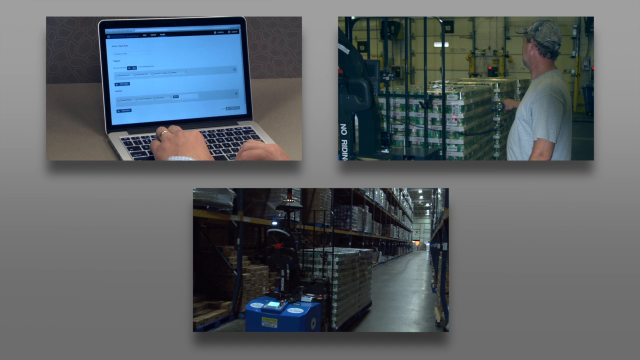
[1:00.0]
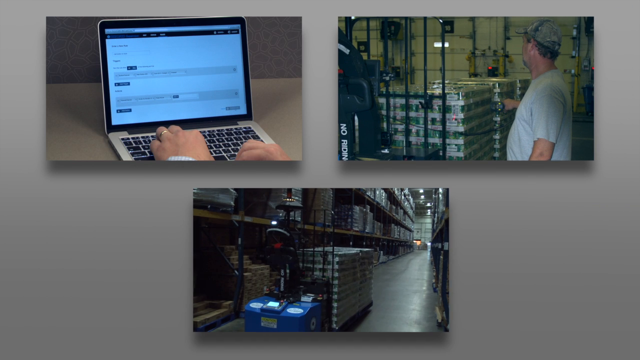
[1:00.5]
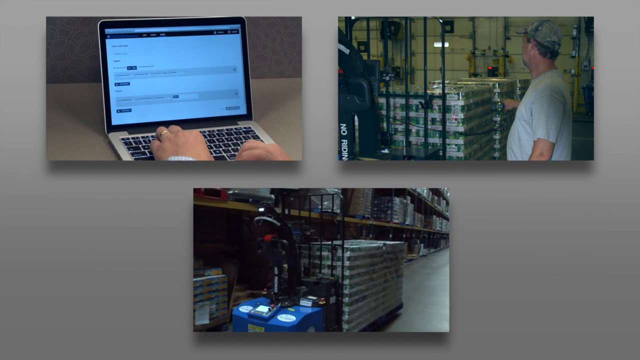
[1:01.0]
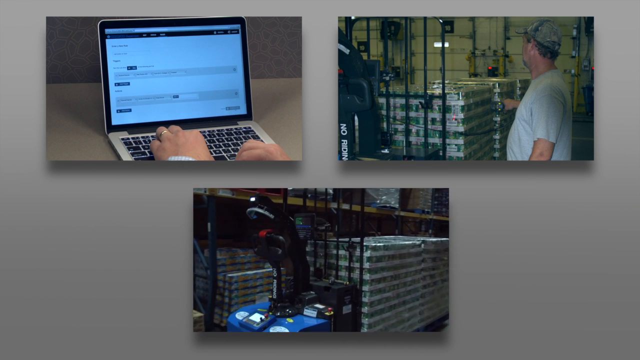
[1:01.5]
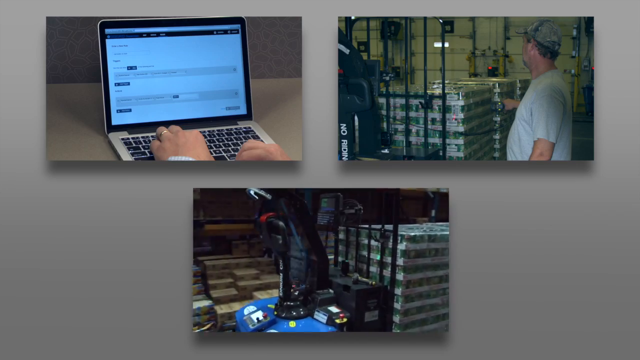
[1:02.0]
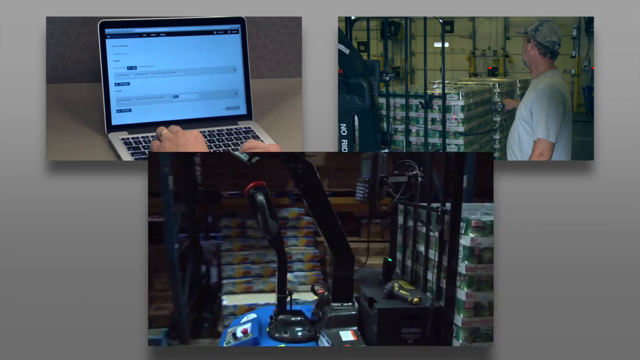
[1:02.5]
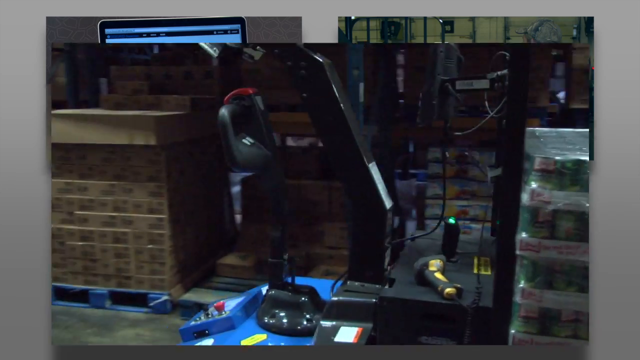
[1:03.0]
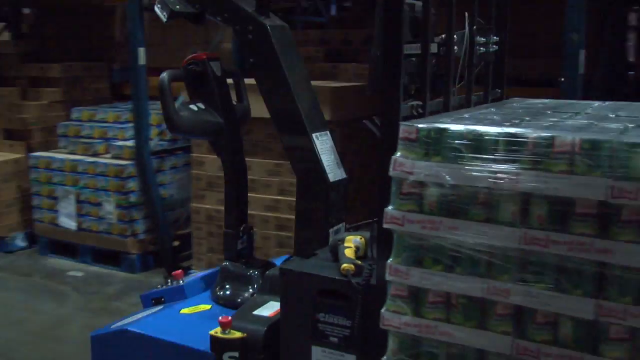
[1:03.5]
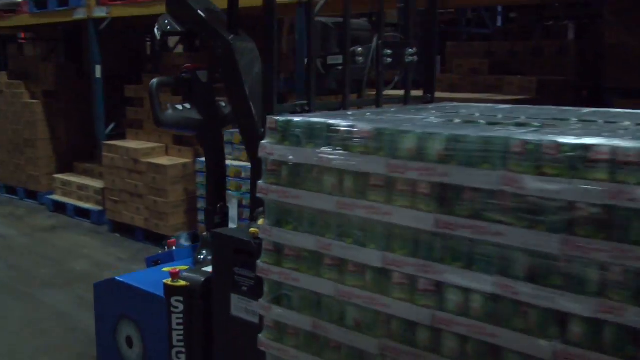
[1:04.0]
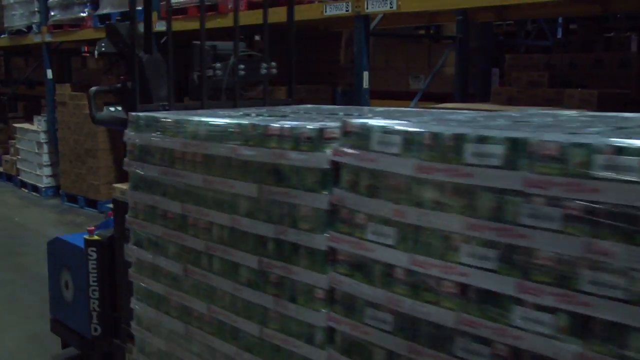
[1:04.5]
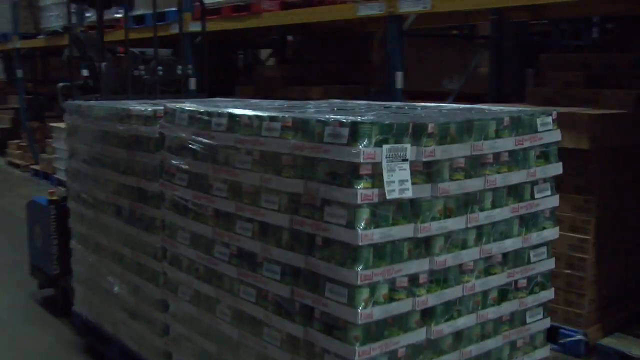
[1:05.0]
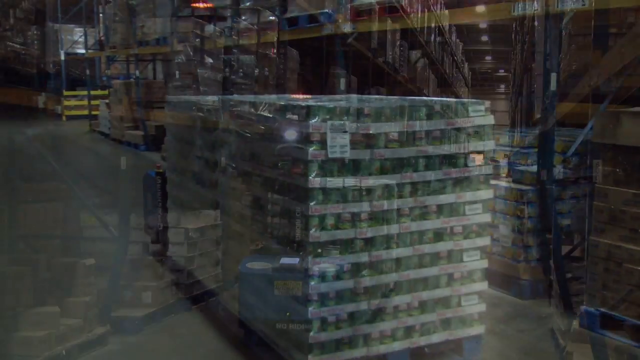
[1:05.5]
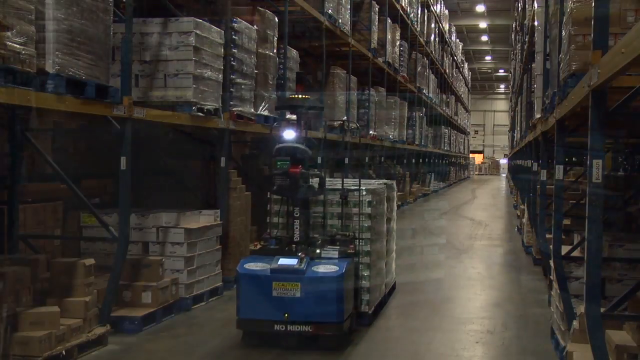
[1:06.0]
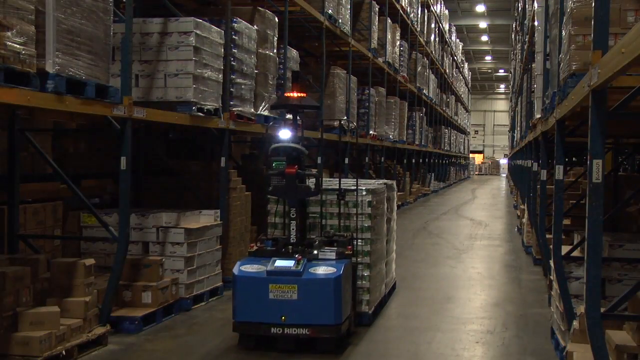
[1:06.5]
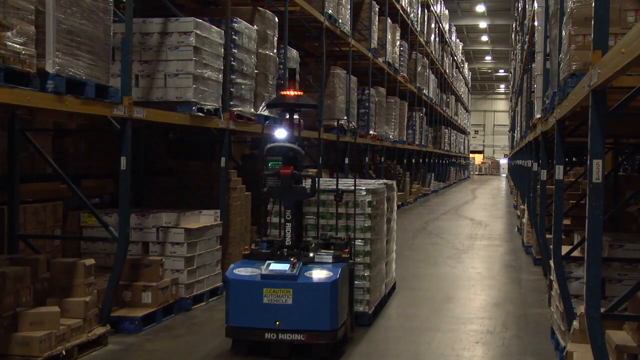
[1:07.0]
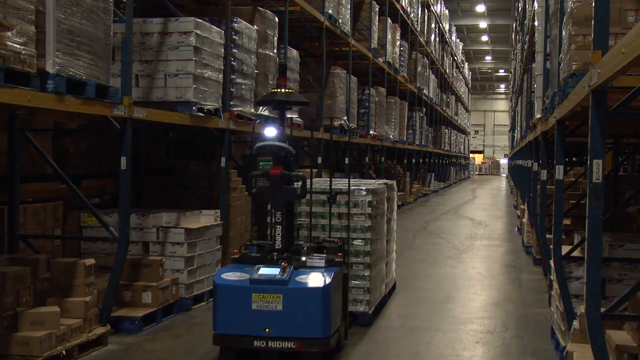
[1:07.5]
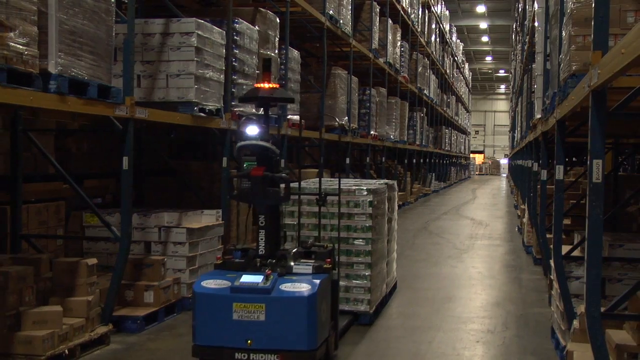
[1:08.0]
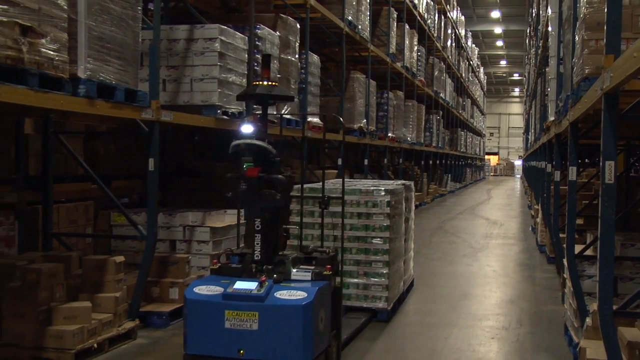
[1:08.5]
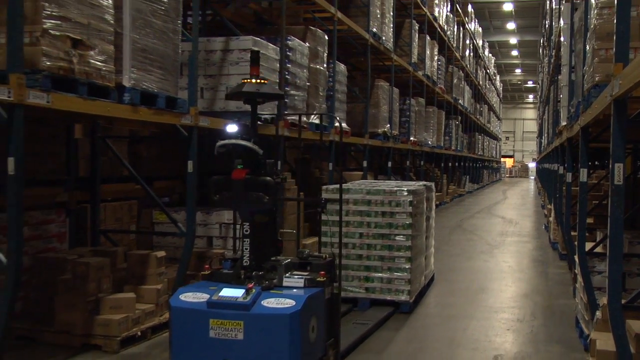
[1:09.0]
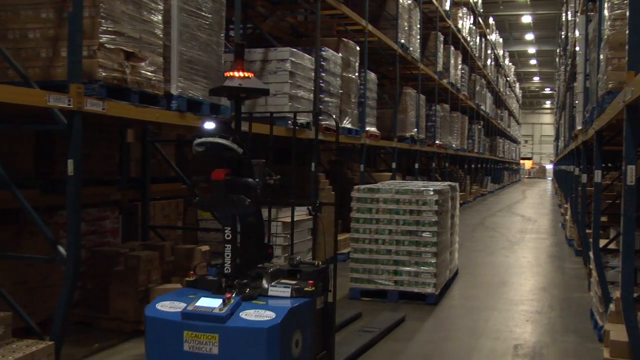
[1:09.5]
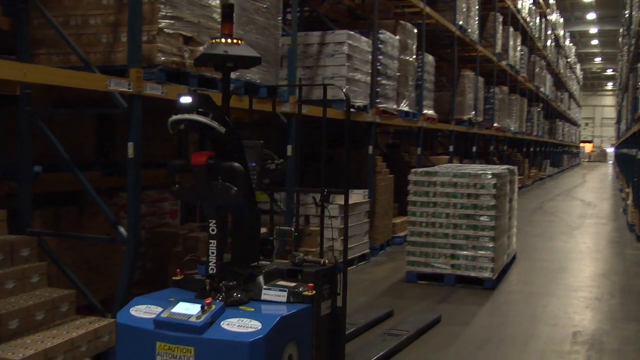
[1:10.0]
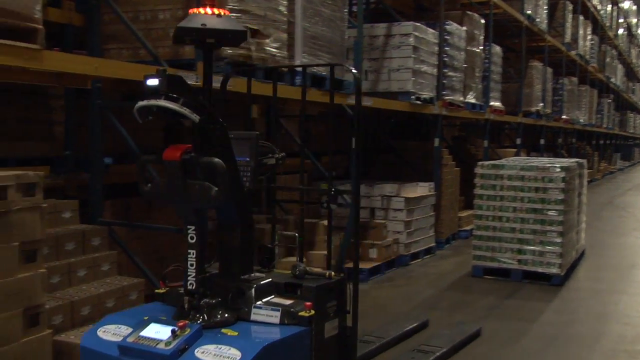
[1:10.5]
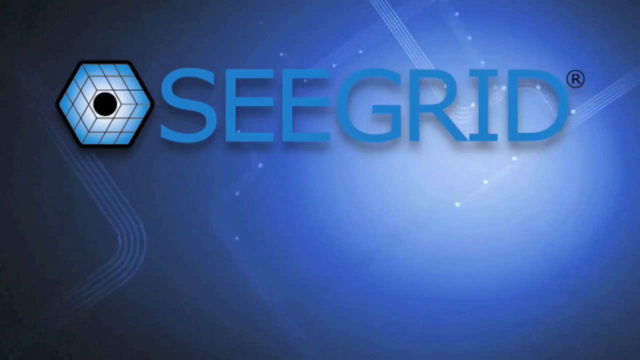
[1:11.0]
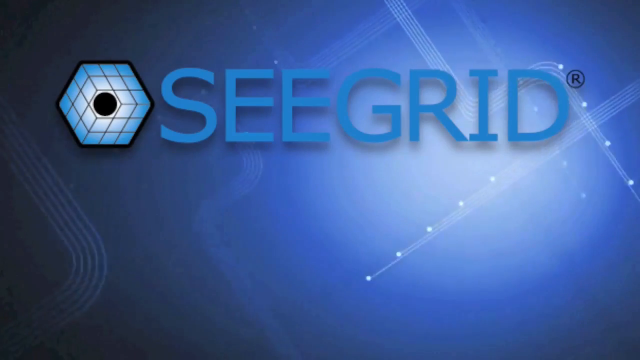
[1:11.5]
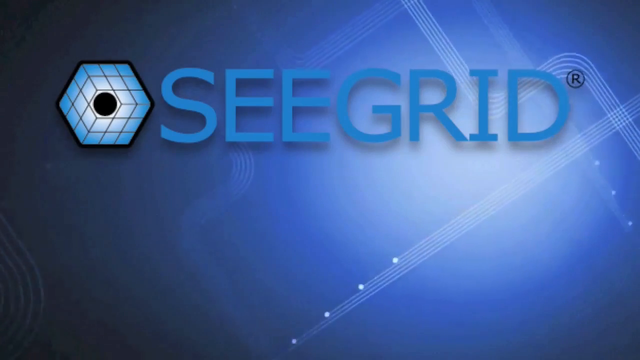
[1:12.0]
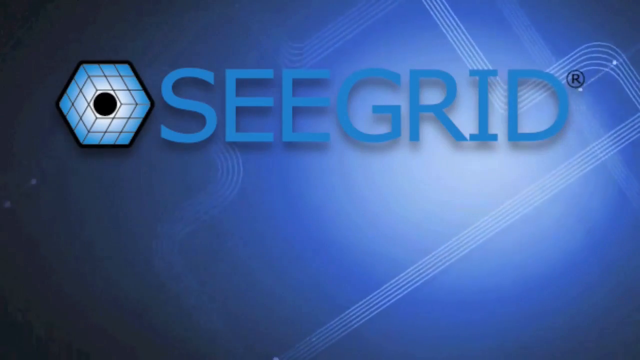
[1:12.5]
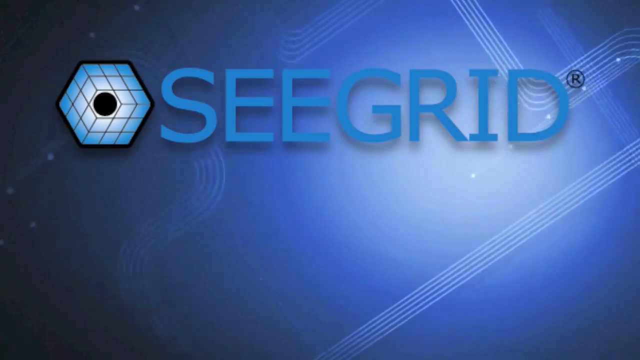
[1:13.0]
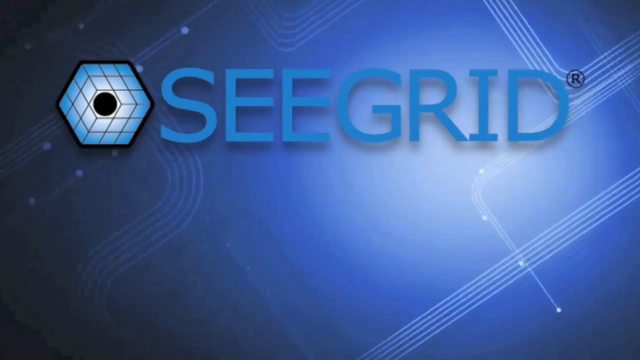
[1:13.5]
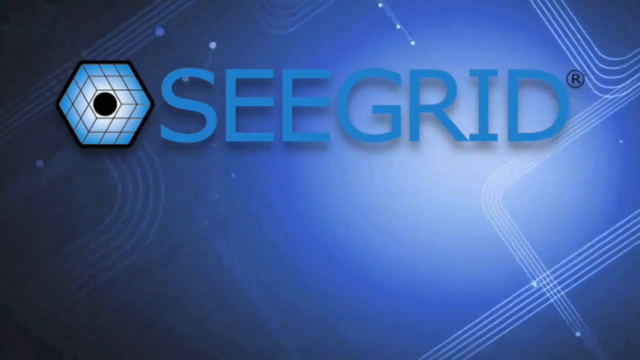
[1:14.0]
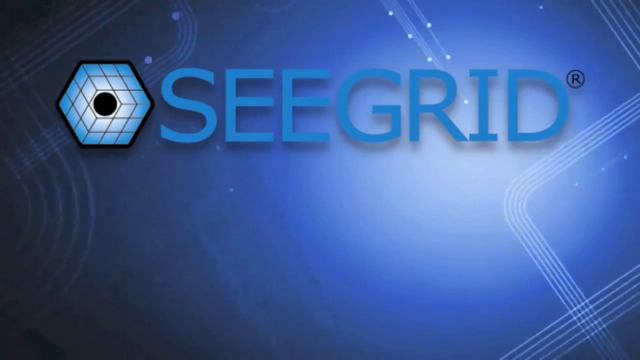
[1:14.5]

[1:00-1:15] The forklifts shown are not controlled by human beings but appear to be driven by robots. One has lifted a lot of boxes and left them where they are supposed to be. The animation of controlling the fleet continues, with a lot of forklifts running up and down in the store, controlled by the robots, apparently so that they won't hit each other. The name of the company, Seagrid, appears at the end of the video.